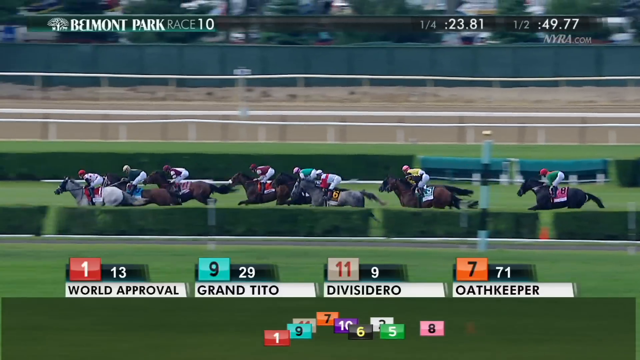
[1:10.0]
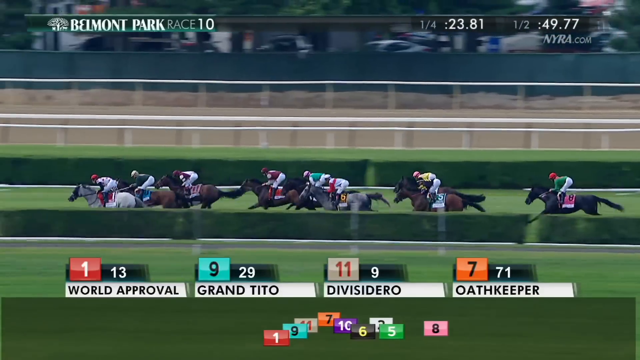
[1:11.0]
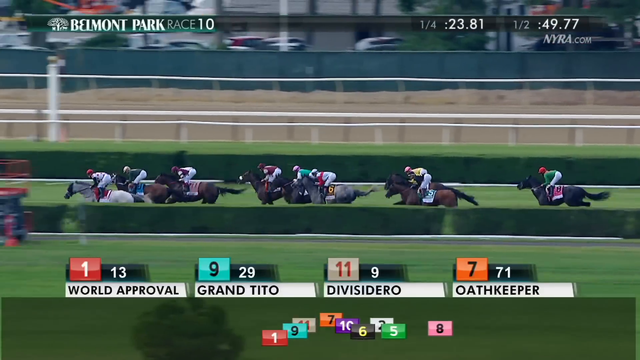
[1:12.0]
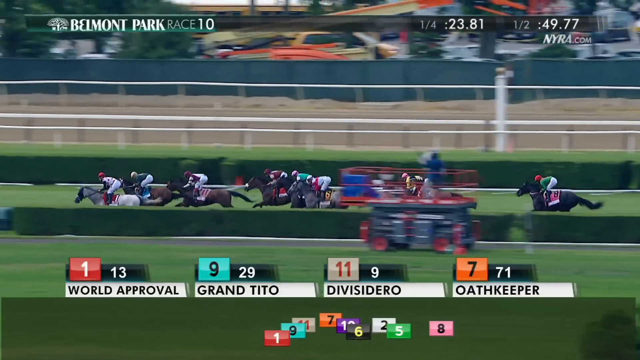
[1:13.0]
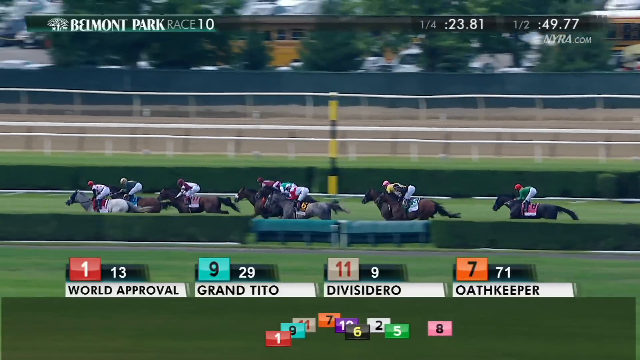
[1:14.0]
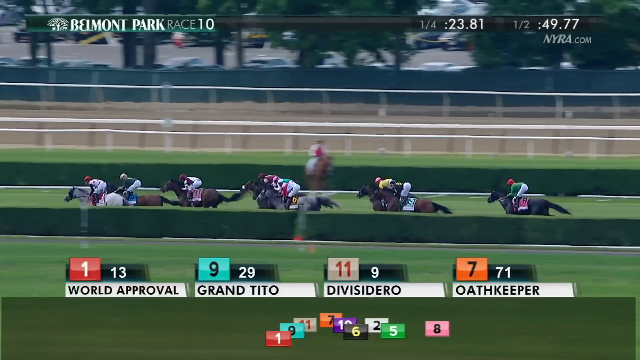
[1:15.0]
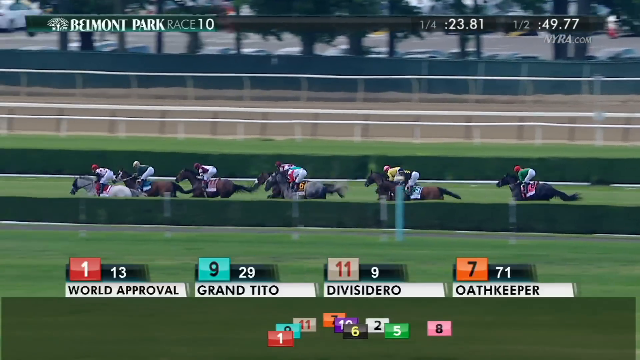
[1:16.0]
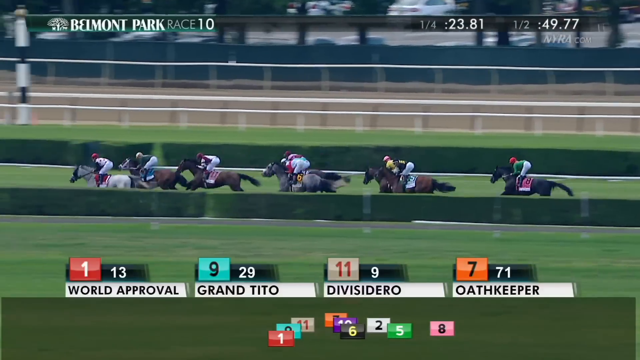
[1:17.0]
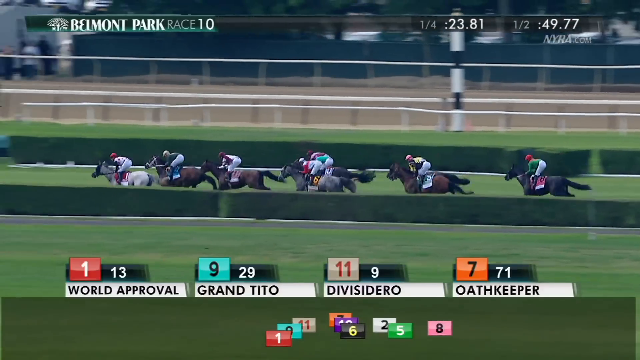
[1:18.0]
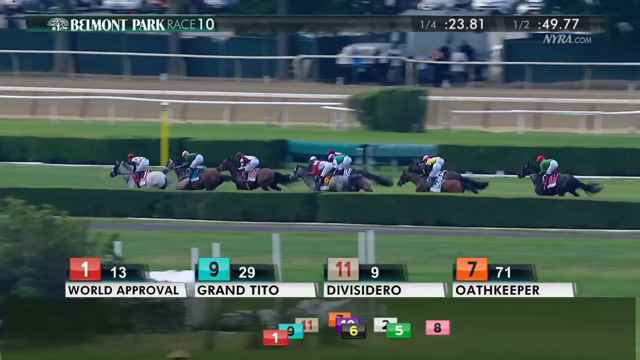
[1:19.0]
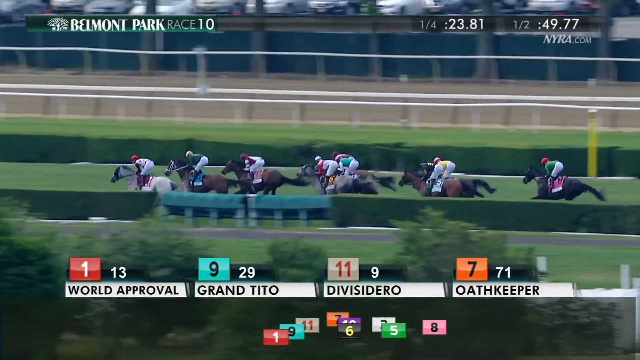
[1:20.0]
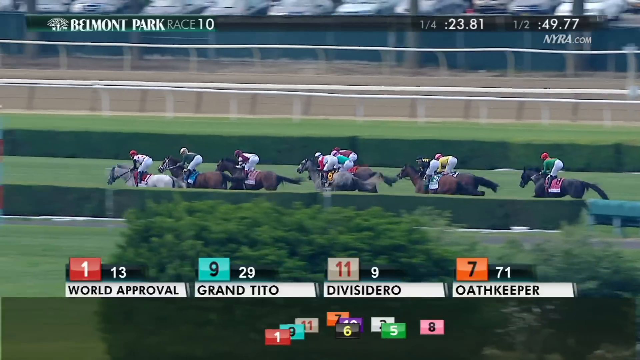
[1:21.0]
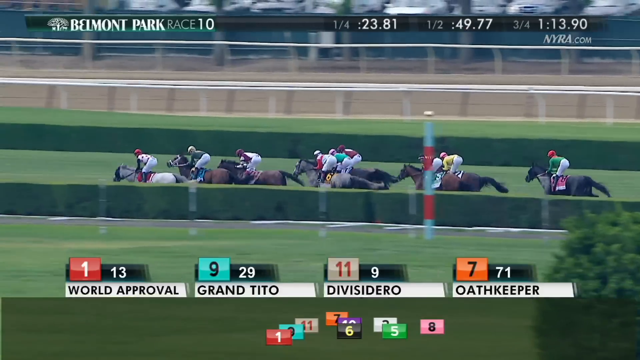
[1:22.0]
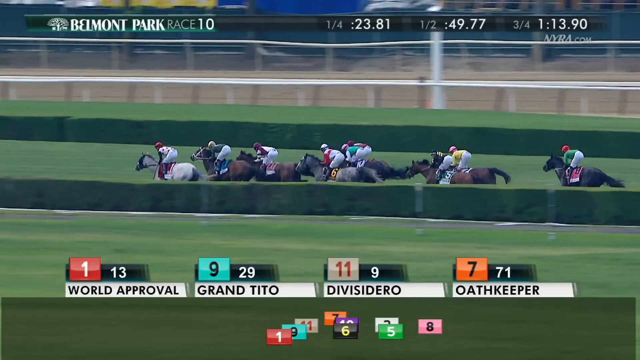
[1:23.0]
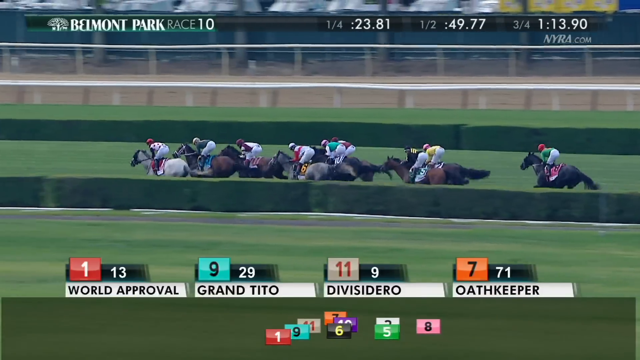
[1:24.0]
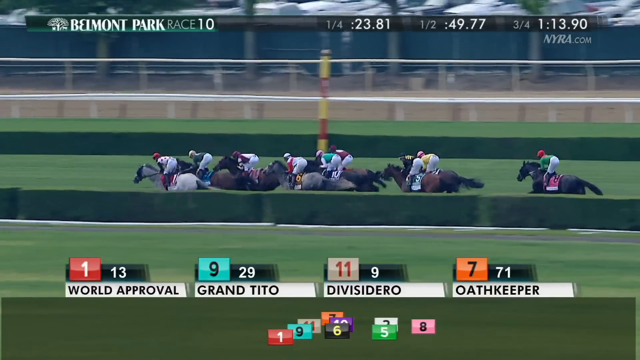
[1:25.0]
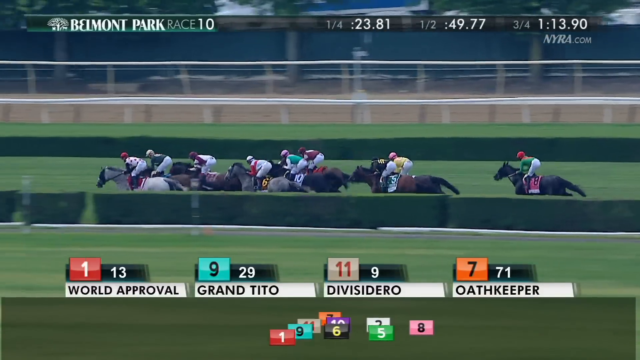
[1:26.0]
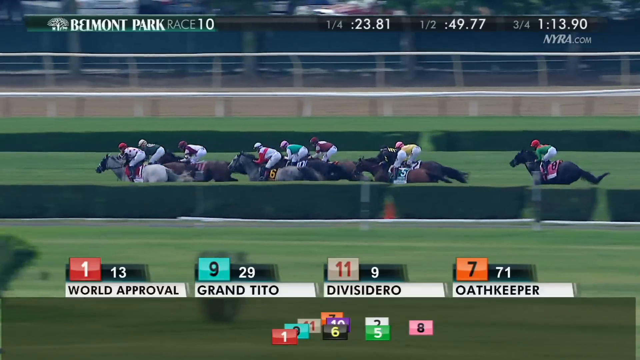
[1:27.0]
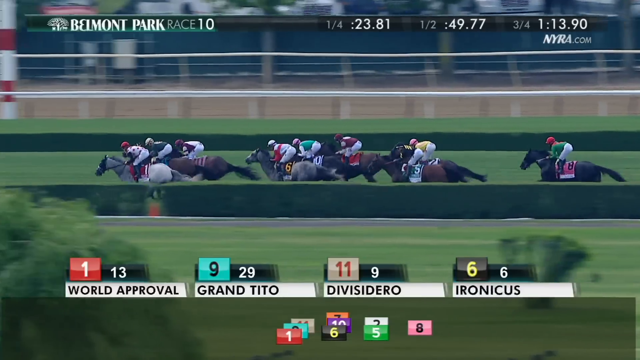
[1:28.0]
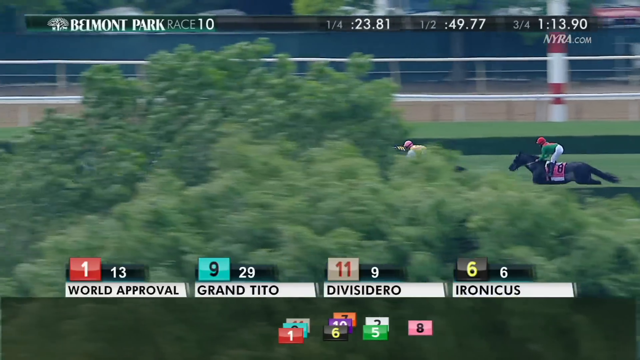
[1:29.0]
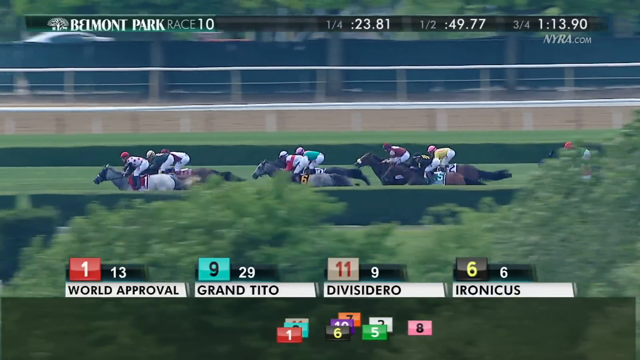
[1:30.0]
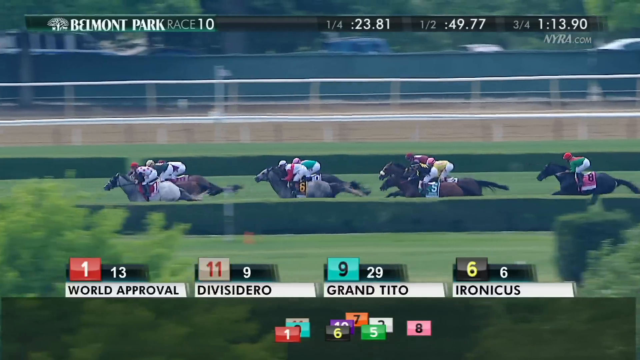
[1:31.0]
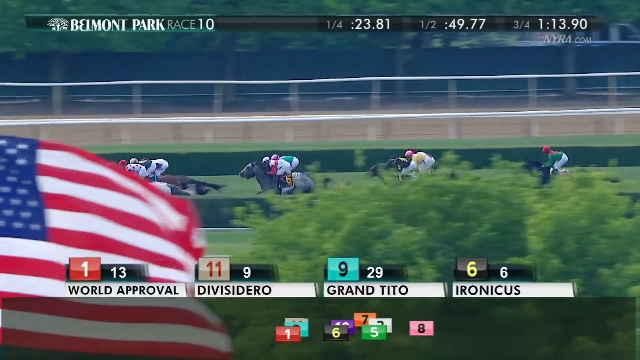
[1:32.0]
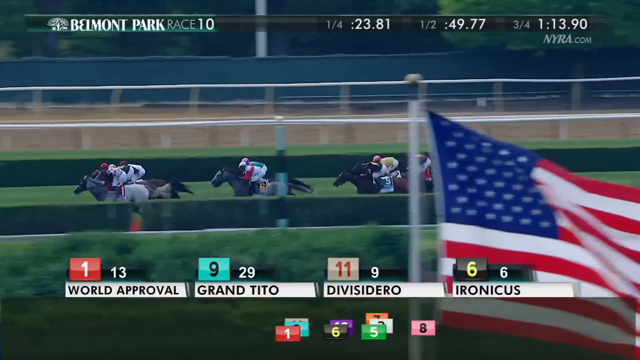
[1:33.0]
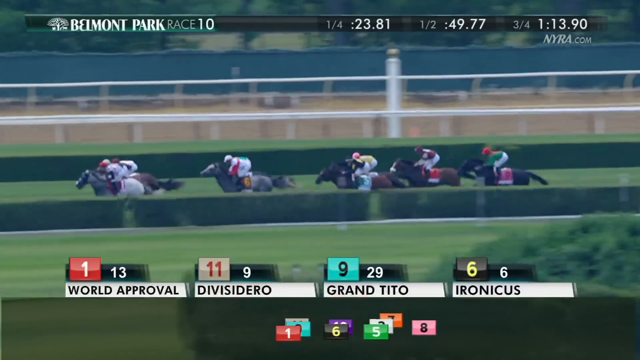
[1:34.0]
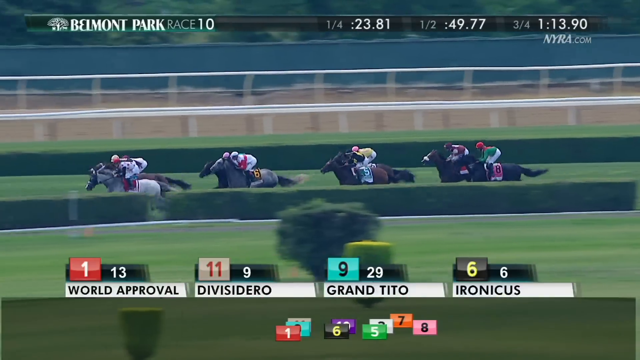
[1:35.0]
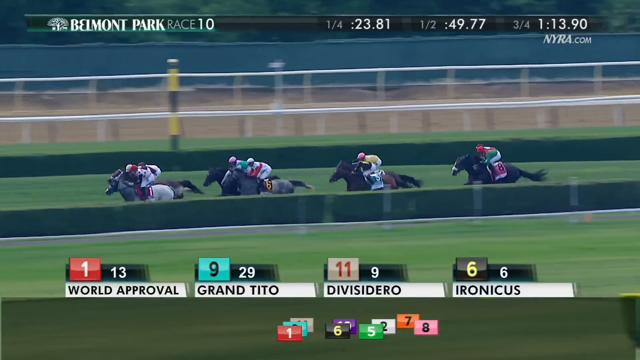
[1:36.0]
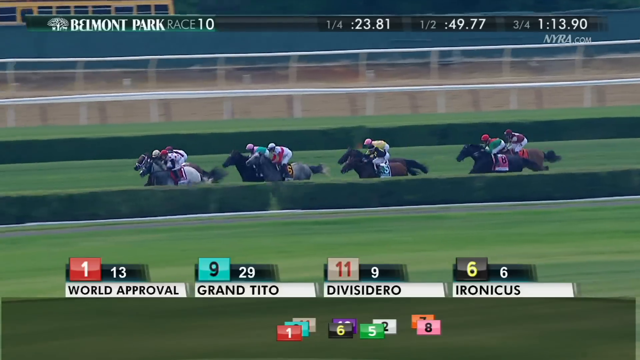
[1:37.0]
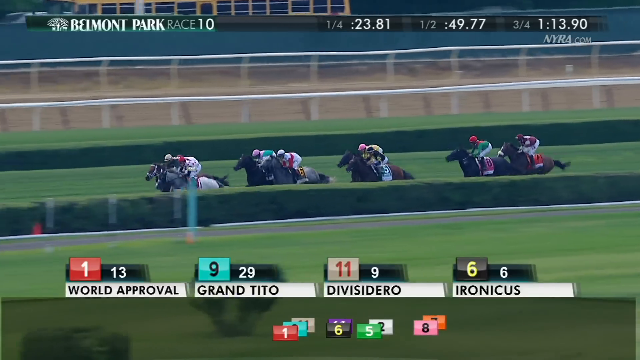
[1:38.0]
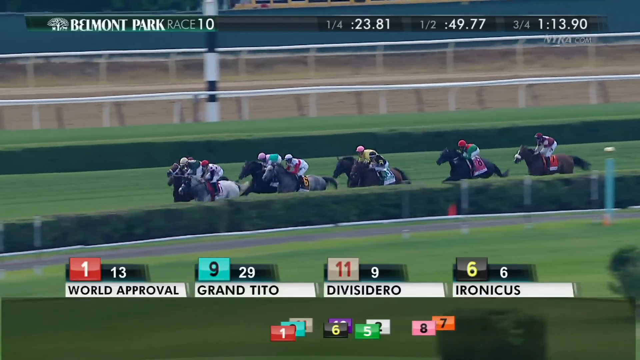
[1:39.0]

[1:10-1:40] A horse race is shown with "Belmont Park Race 10" at the top left, along with times of 23.81 for the quarter and 49.77 for the half. Listed in a row at the bottom, World Approval is in first, Grand Tito second, Divisadero third and Oathkeeper fourth. The track has short hedges around the whole outer rim and on the inside and outside of the track. At the very bottom is something almost like a little chart, a display of the horses' current placings showing their starting posts. The horses race around the whole circle of the track. At the top, a three-quarter time of 1:13.90 appears. Arnyx takes fourth again, and the horses keep racing in a circle, hugging the inner hedge.